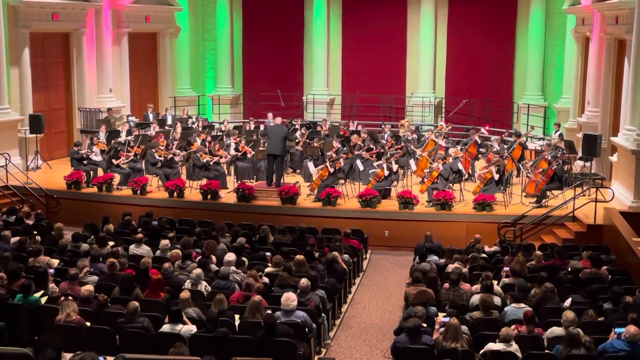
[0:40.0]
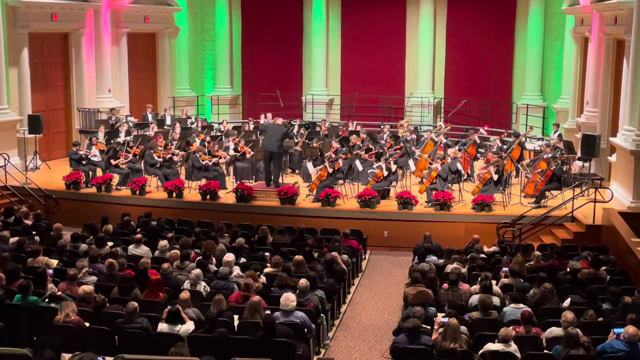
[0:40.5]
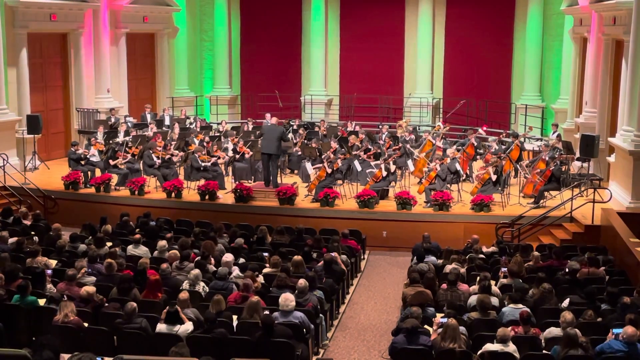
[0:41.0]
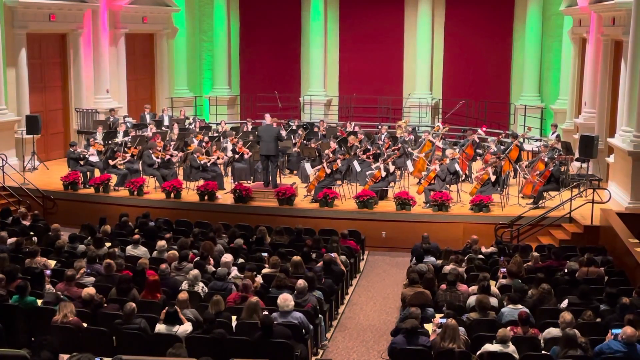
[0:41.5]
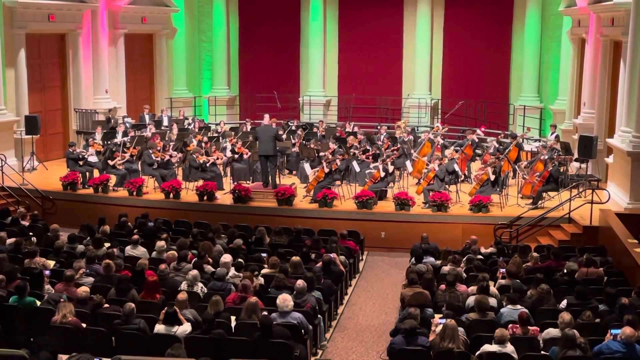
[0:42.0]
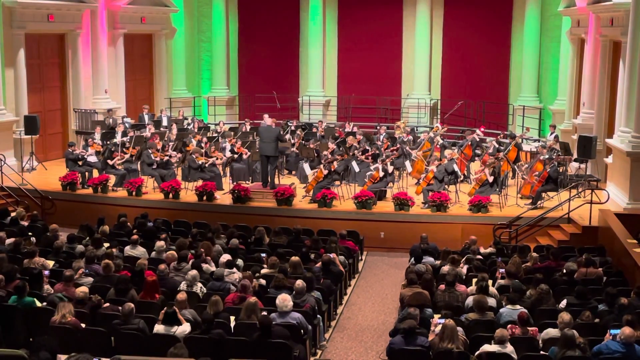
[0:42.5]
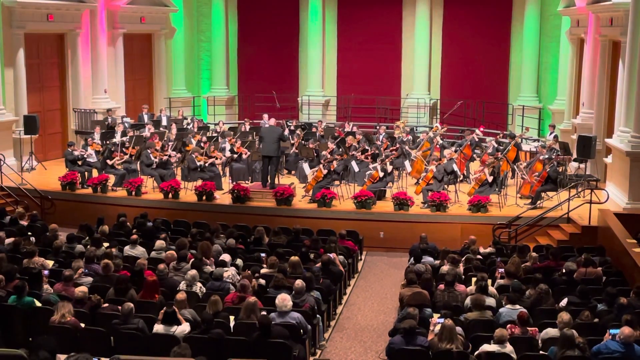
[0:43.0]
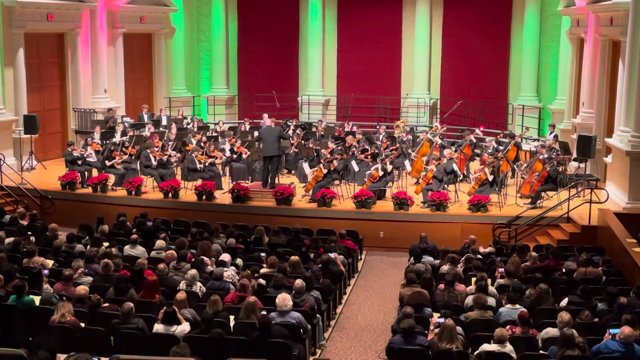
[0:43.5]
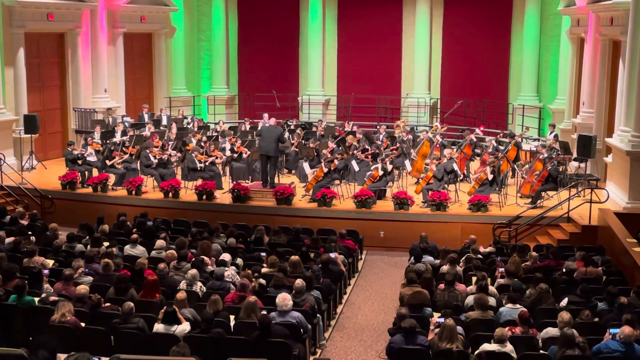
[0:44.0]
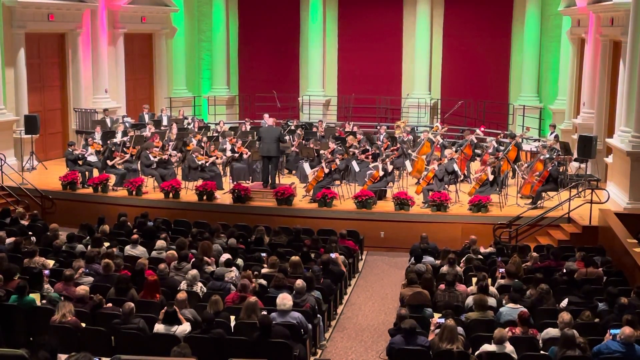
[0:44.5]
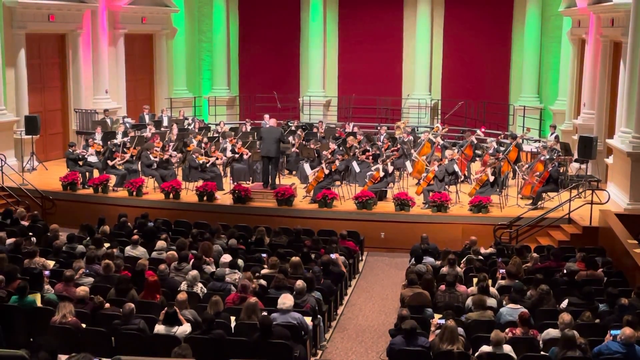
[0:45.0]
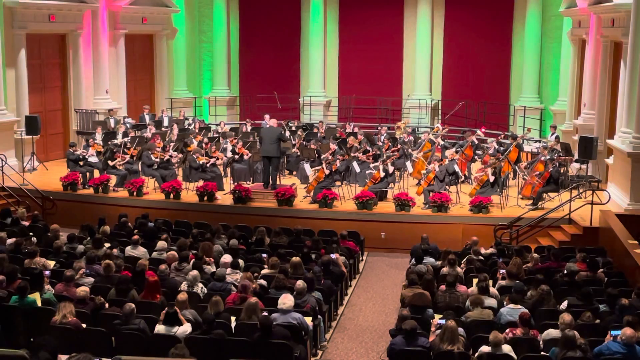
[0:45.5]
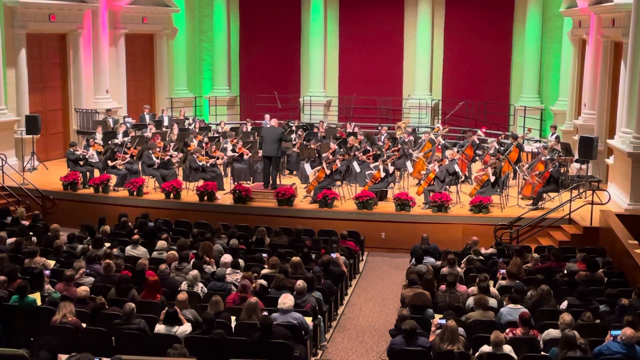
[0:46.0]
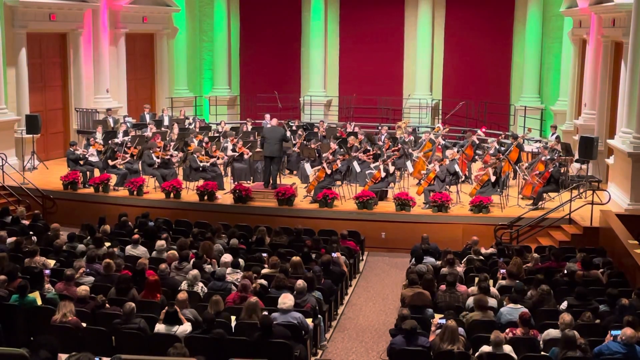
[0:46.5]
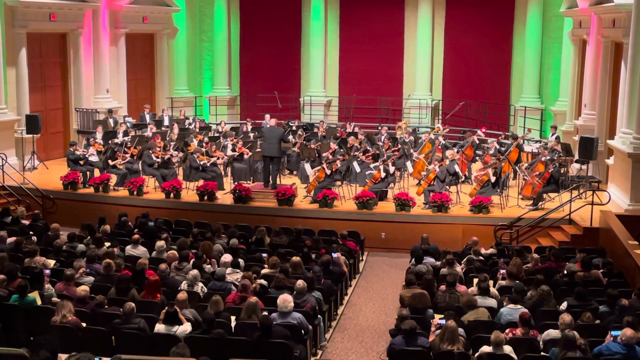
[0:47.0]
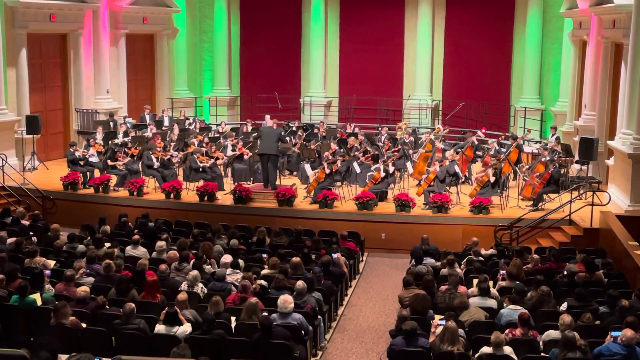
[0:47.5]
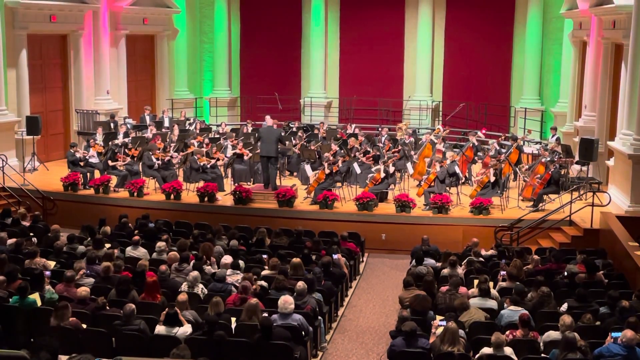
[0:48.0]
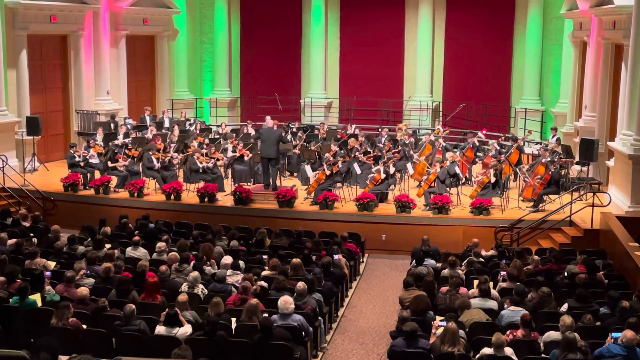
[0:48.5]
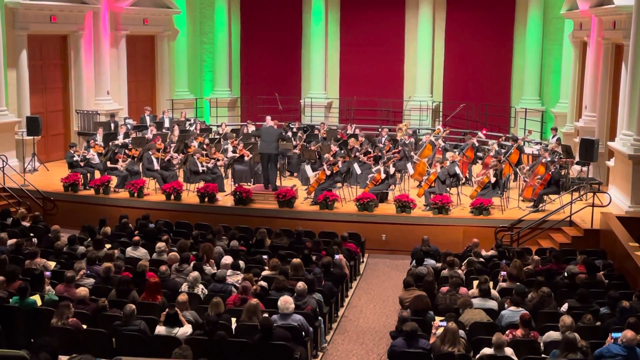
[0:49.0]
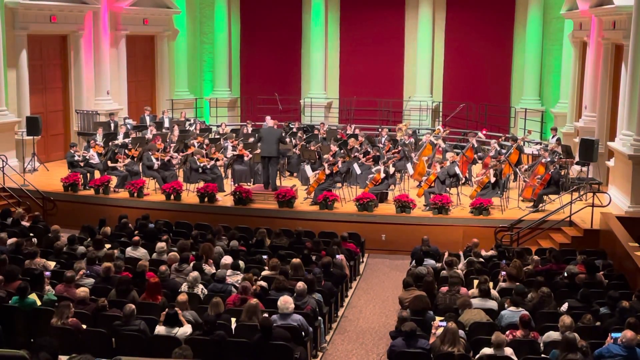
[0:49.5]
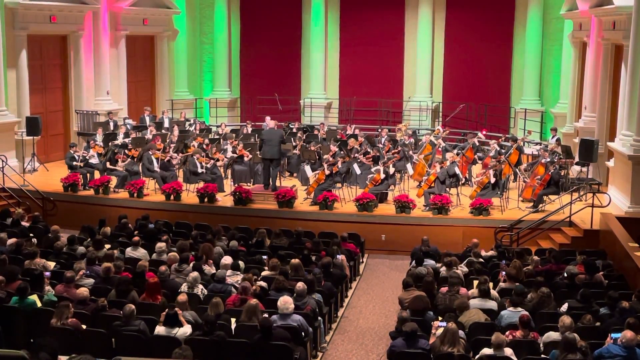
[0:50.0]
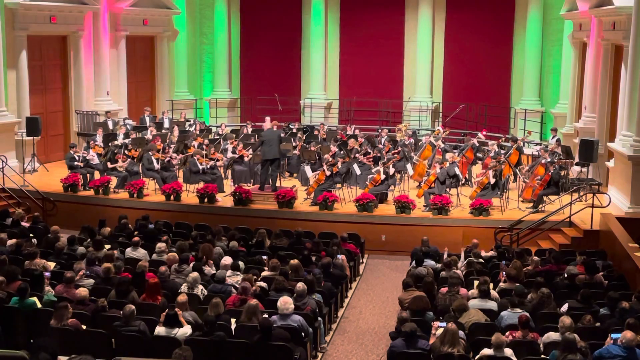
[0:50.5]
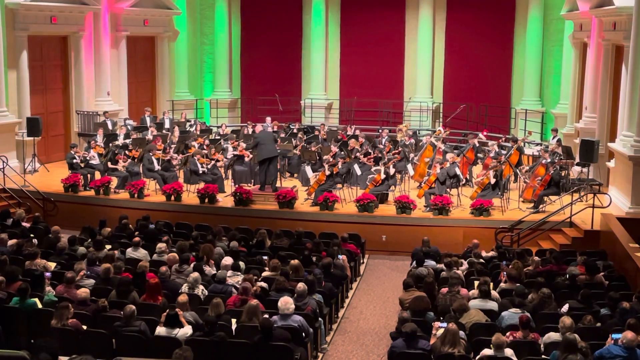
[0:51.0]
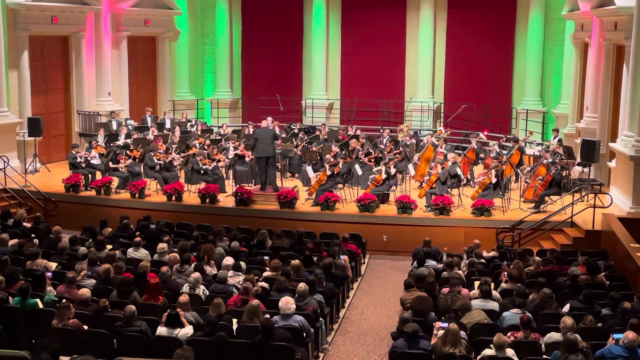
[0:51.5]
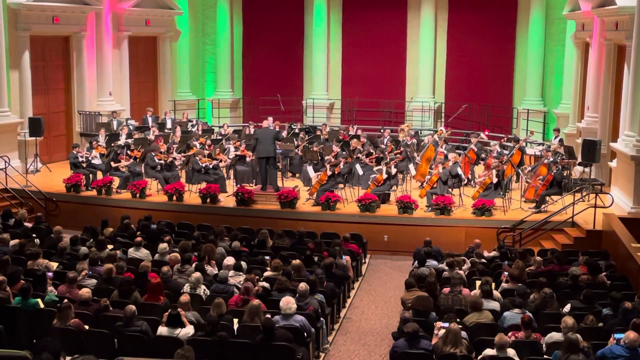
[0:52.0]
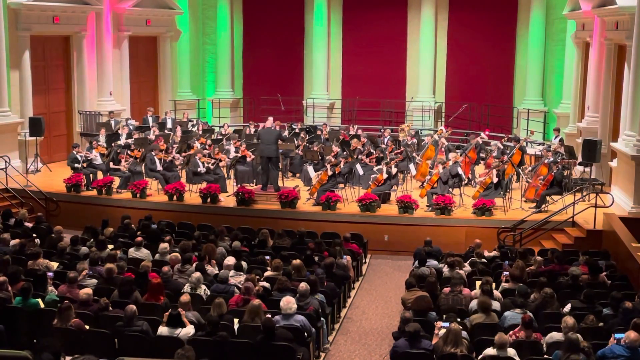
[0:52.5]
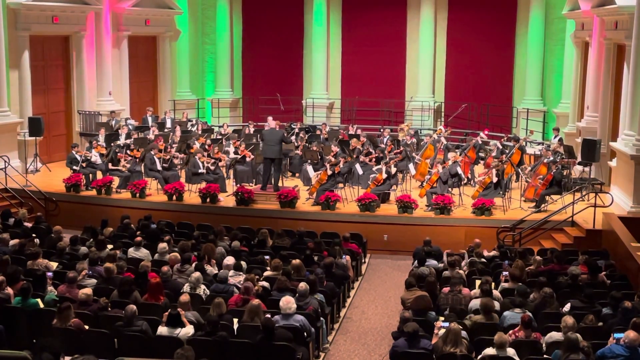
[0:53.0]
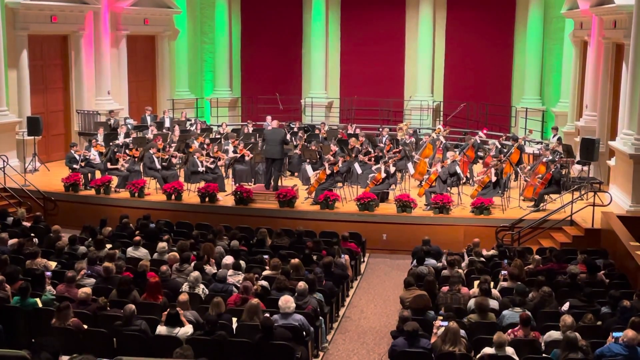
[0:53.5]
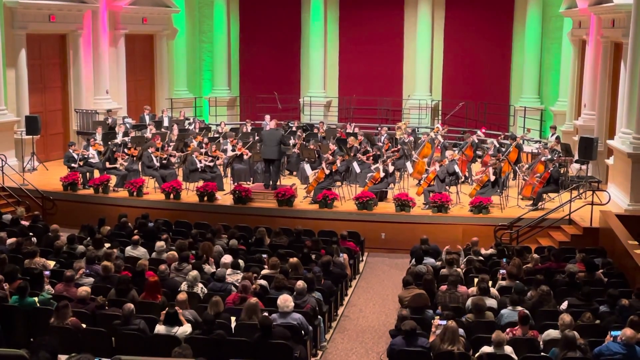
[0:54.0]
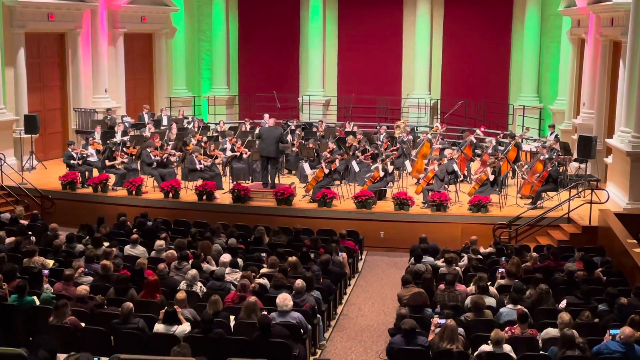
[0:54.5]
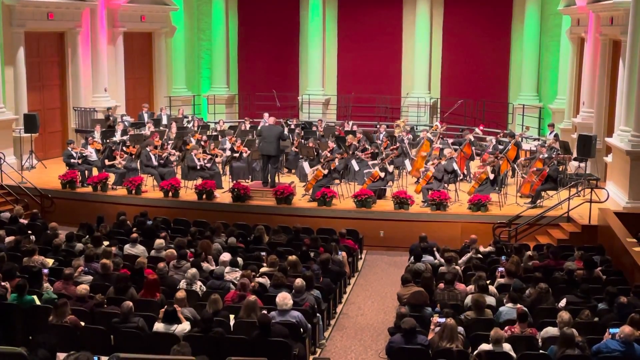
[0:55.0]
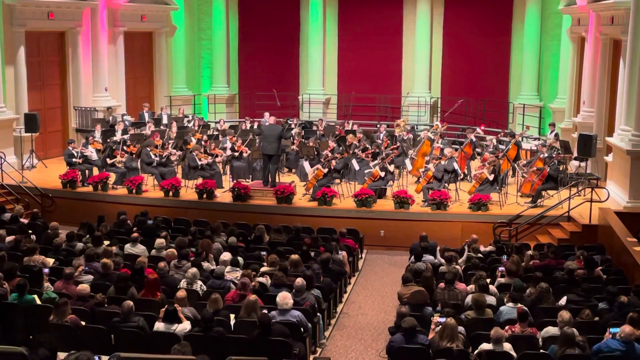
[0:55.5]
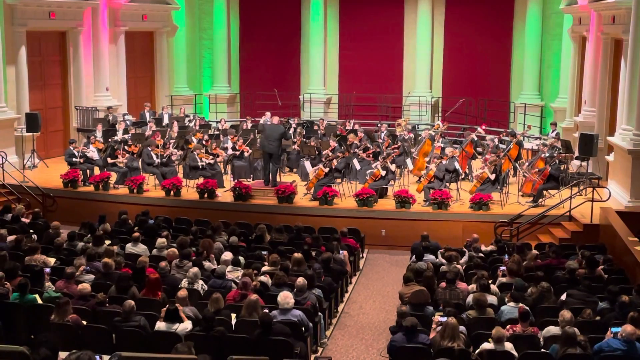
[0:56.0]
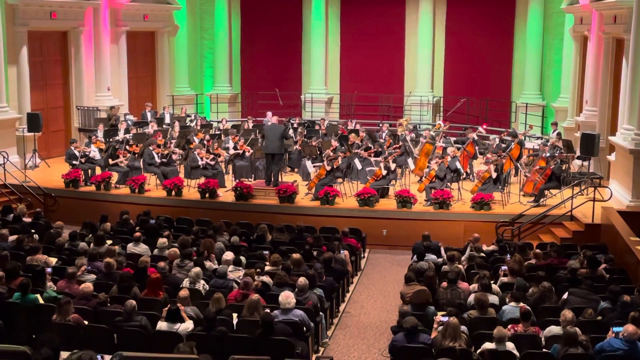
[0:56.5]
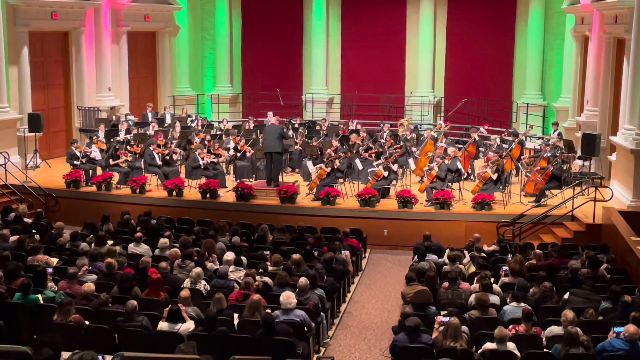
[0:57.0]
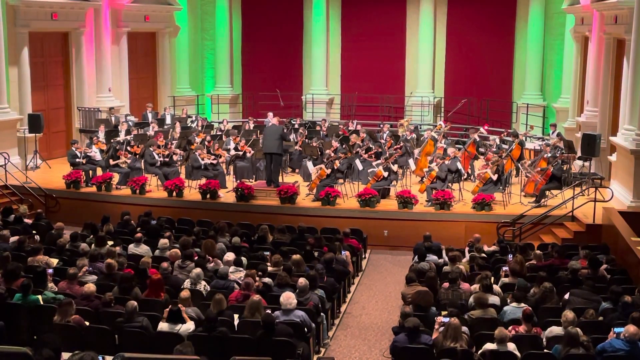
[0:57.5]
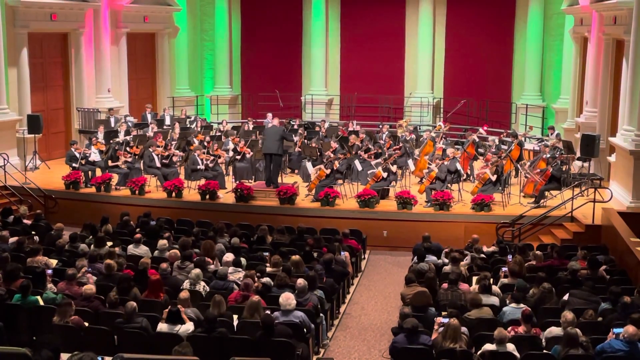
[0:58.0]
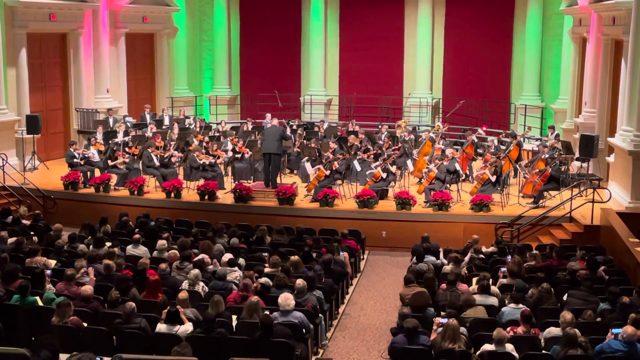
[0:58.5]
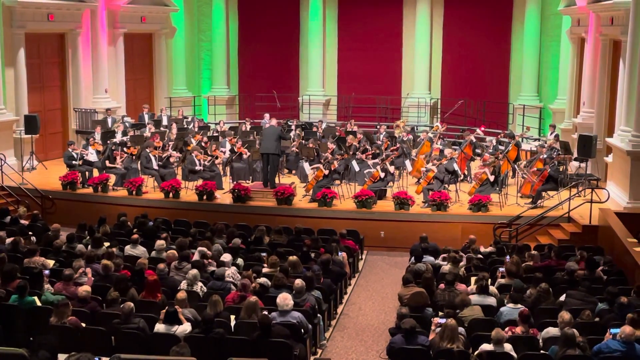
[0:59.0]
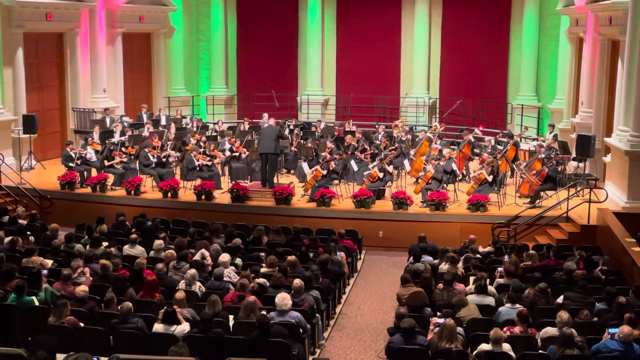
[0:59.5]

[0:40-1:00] The band is still playing and the conductor is still leading them, moving his arms steadily and exuberantly from one side to the other while holding a stick. A person in the audience is cheering the performance on enthusiastically. There are white pillars, with red and green lights, especially green ones, shining on several of them. The wall in the background is red, and there are two exit doors on each side of the stage. Music boards are visible for the players to read from. The audience looks happy with the performance; they are sitting, and some move around or talk to the people next to them. The performers' arms are moving as they play their instruments, and the stage is lined with red flowers.